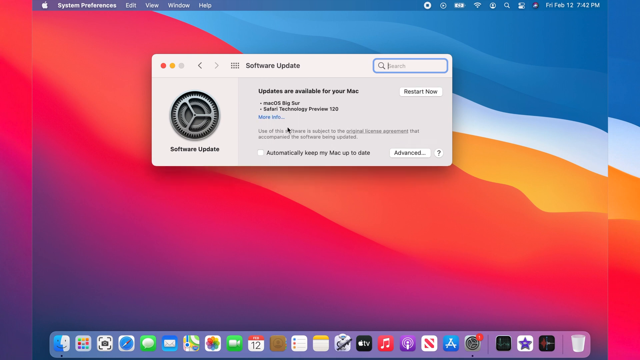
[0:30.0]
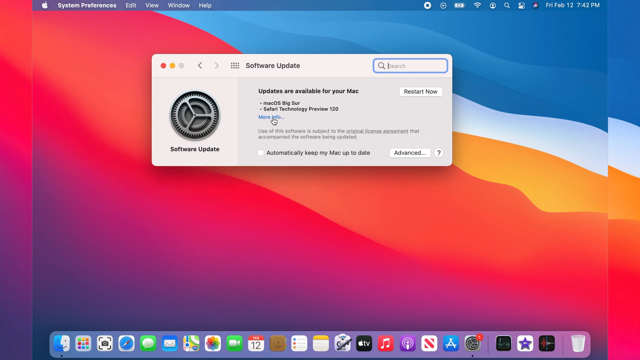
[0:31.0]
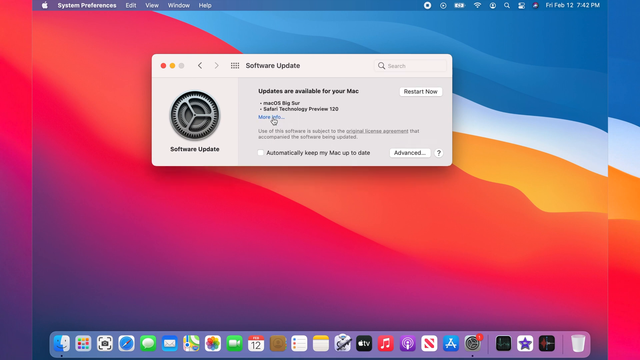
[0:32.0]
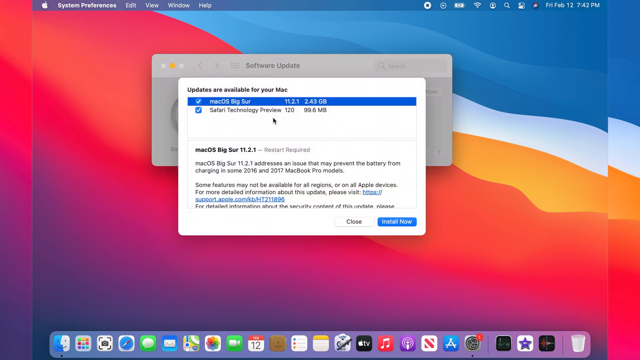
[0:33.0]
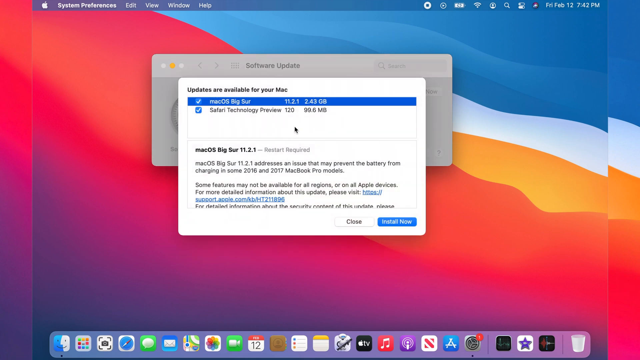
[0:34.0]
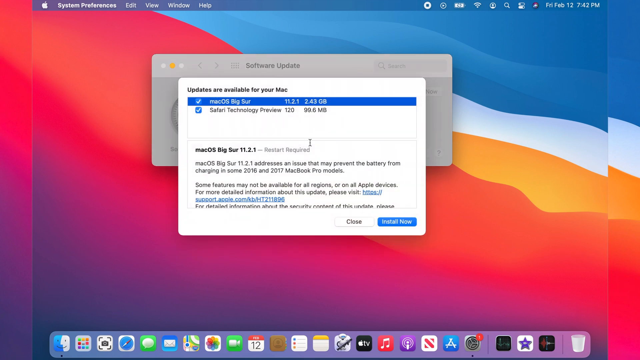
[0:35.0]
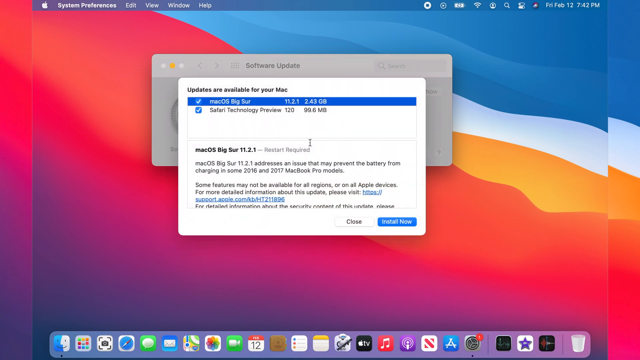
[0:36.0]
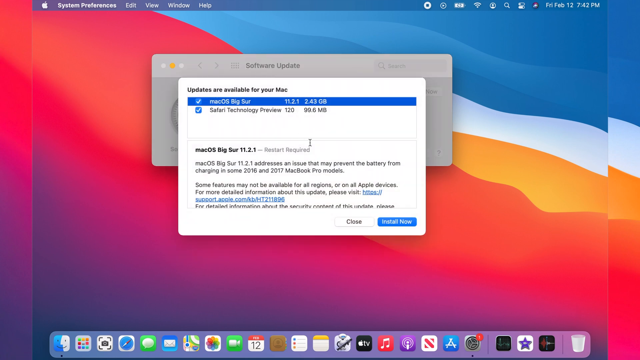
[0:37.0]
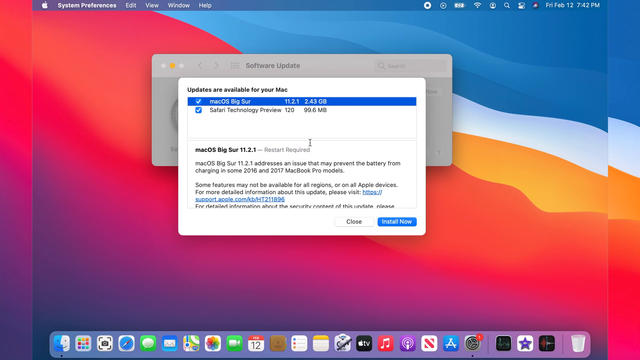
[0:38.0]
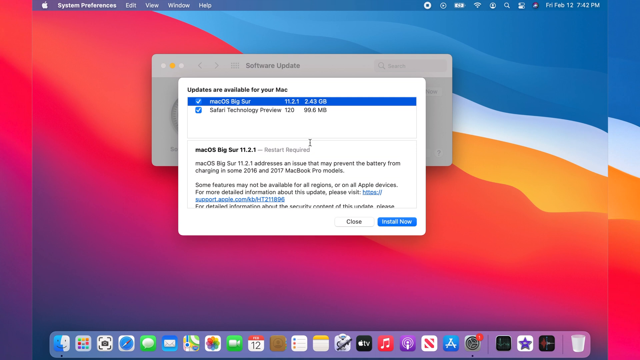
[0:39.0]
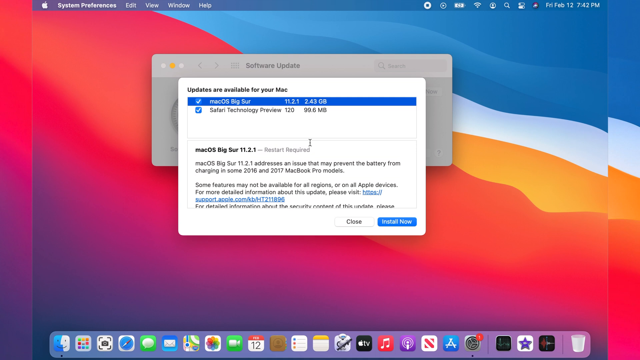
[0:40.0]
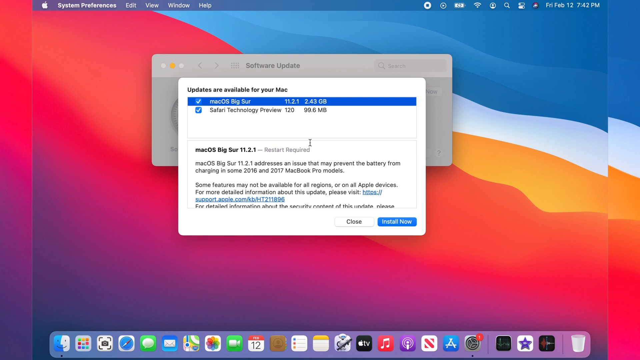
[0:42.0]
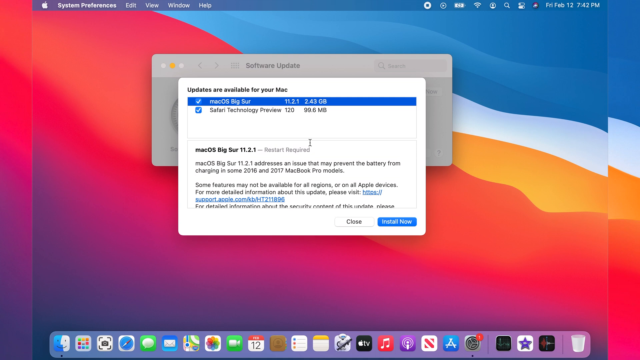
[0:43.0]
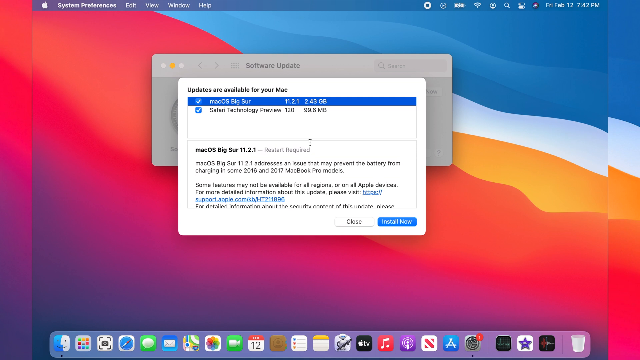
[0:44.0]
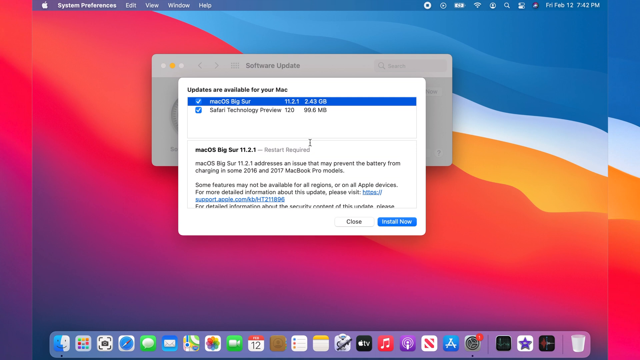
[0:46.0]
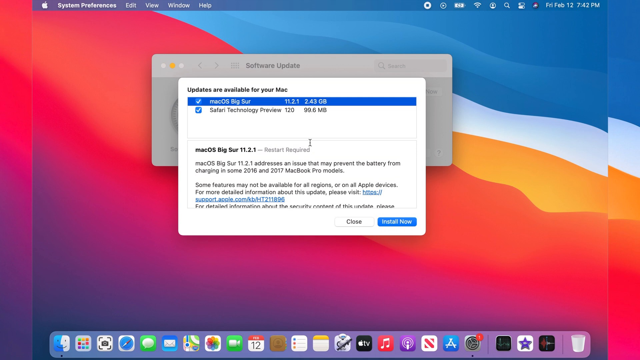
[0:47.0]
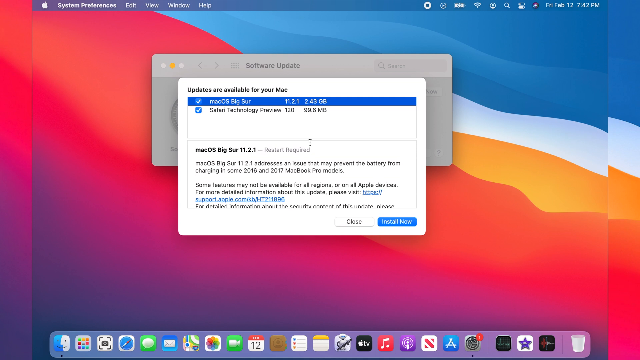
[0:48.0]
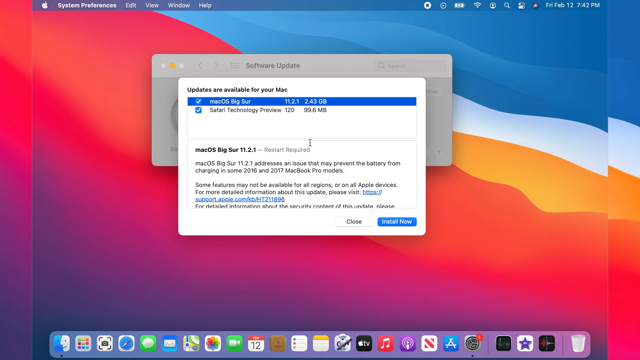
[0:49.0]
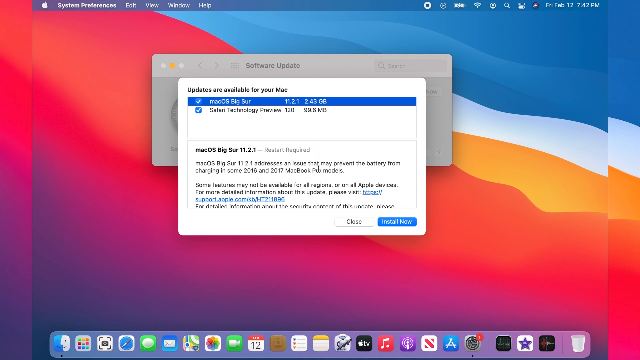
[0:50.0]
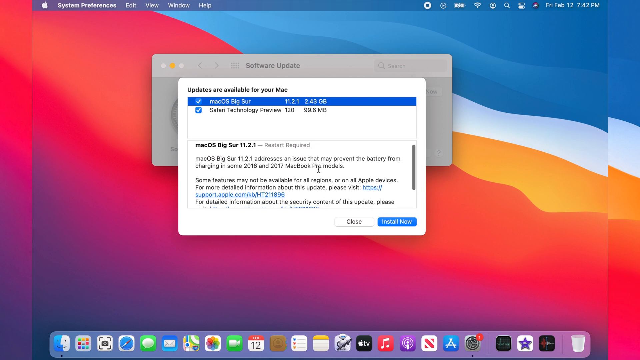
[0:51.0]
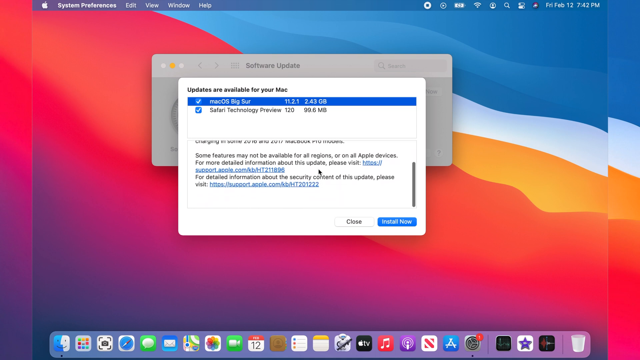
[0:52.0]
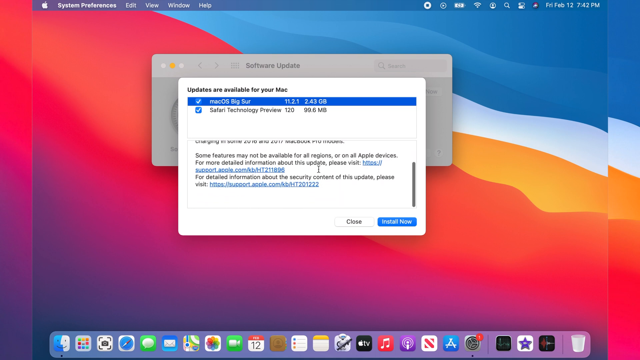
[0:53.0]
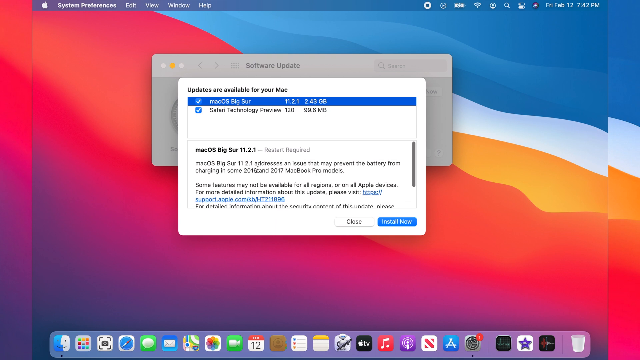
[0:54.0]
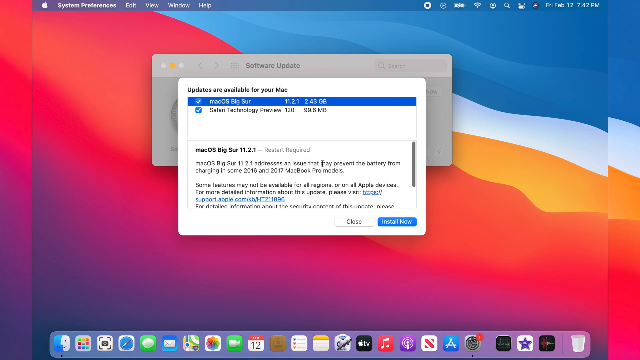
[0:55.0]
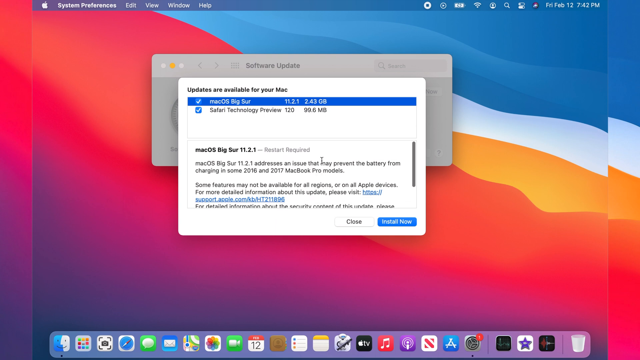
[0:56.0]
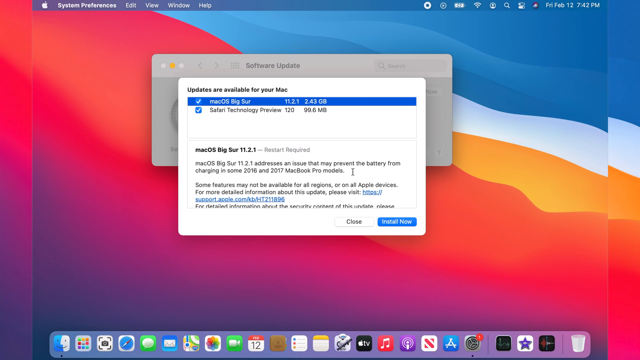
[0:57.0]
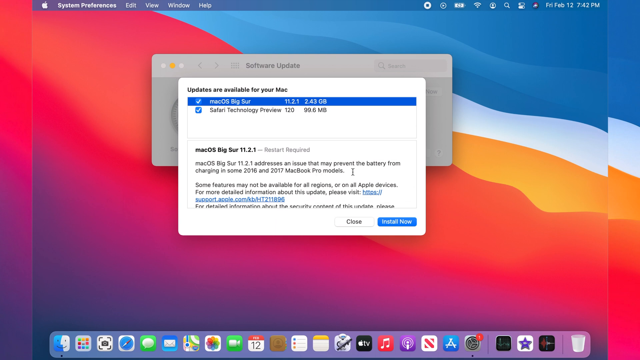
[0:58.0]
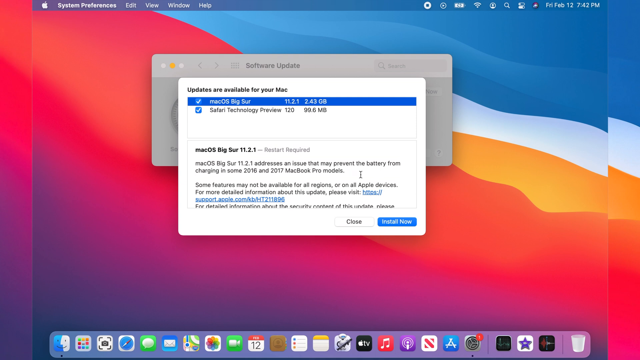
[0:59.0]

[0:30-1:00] He clicks "more info" in blue letters. The screen reads "Updates are available for your Mac" and lists Mac OS Big Sur 11.2.1 at 400.43 gigabytes and Safari technology preview at 99.6 megabytes. Text explains that macOS Big Sur 11.2.1 addresses issues that may prevent the battery from charging in some 2016 and 2017 MacBook Pro models, and that "Some features may not be available for all regions or on all Apple devices." The screen is white, with close and install now buttons that can be pressed. The background is still red, orange, yellow, blue and white. The mouse moves up and down the screen over the text, scrolling up and down the white box with the update.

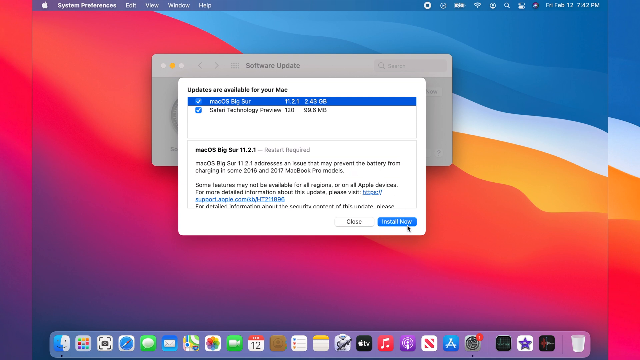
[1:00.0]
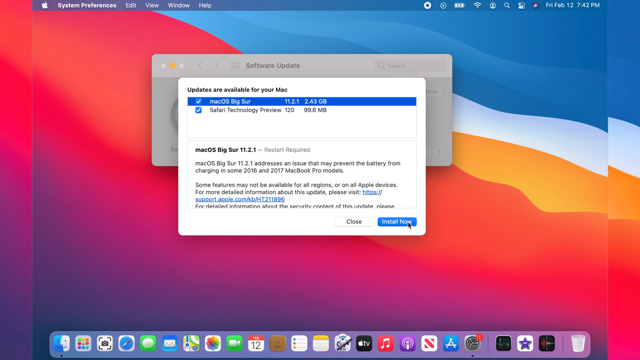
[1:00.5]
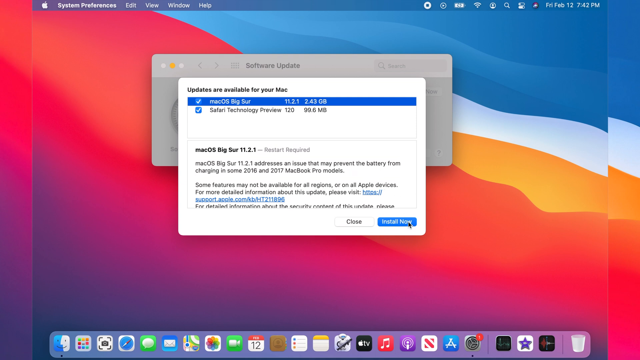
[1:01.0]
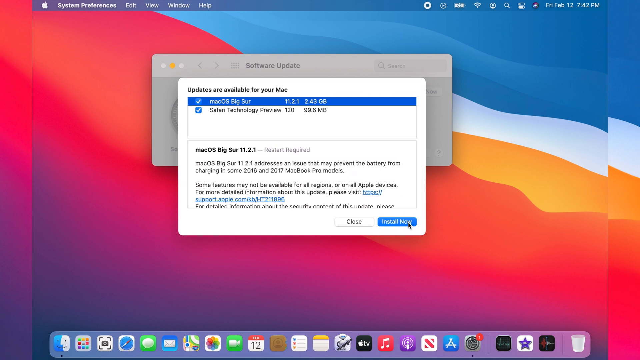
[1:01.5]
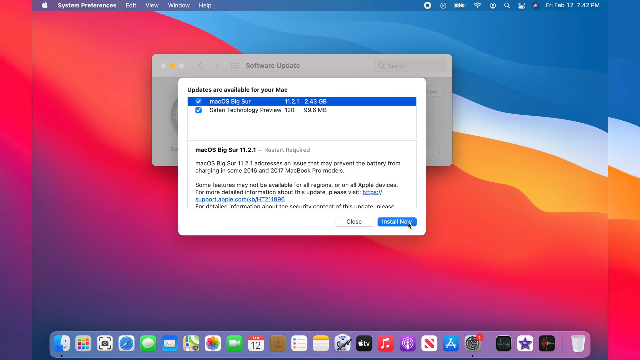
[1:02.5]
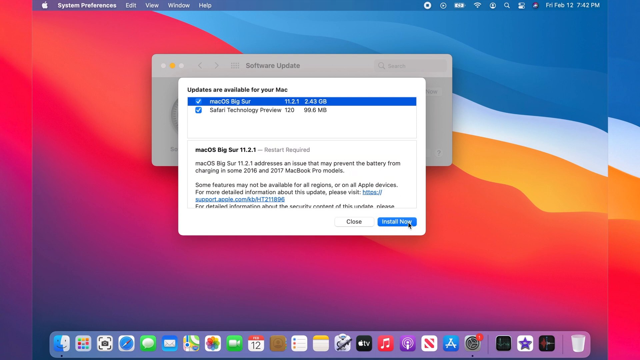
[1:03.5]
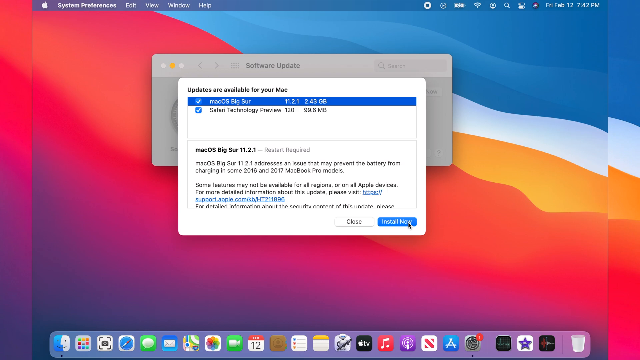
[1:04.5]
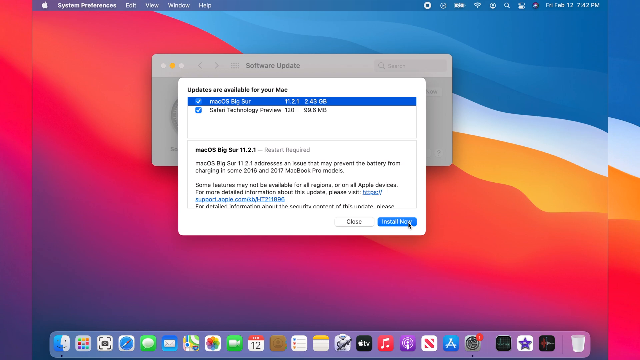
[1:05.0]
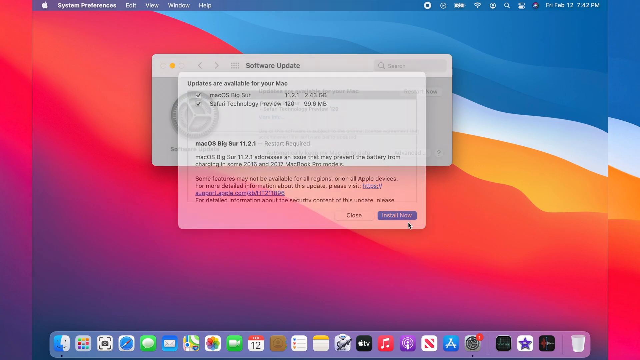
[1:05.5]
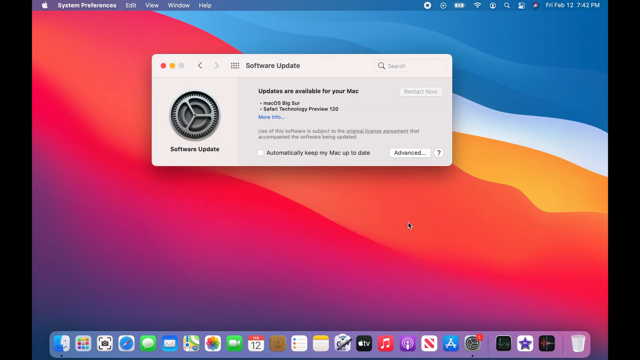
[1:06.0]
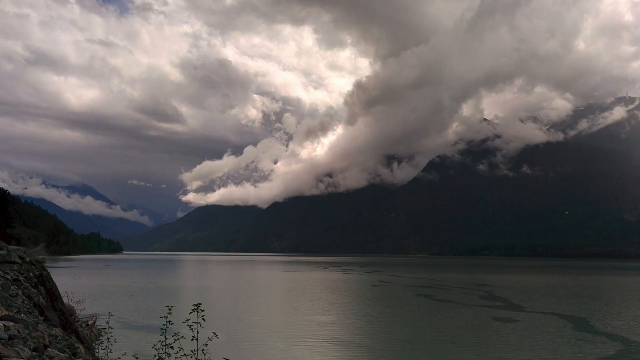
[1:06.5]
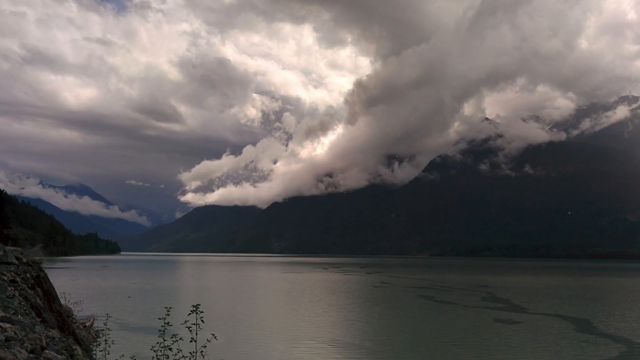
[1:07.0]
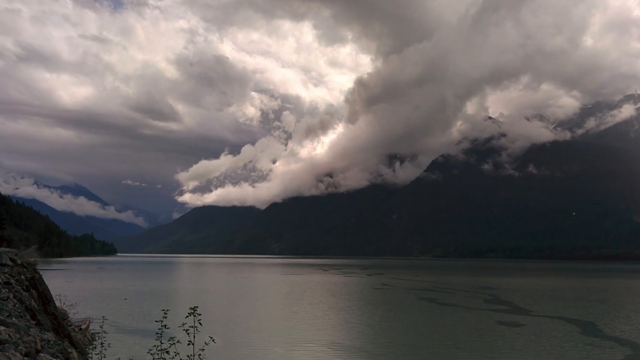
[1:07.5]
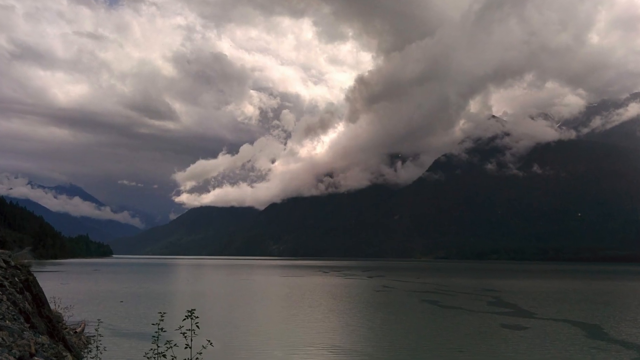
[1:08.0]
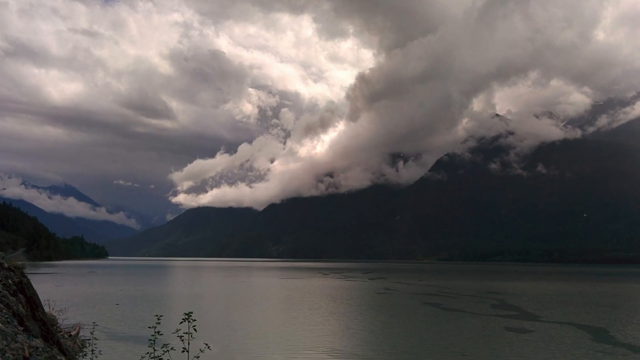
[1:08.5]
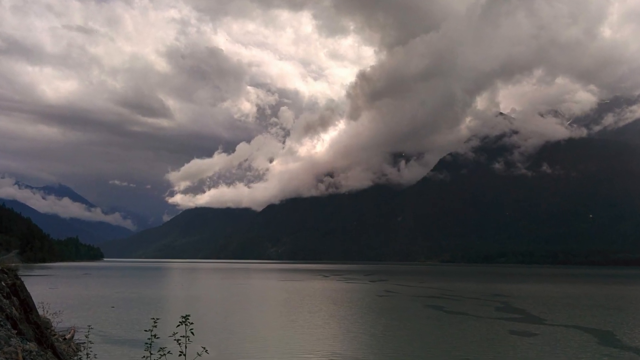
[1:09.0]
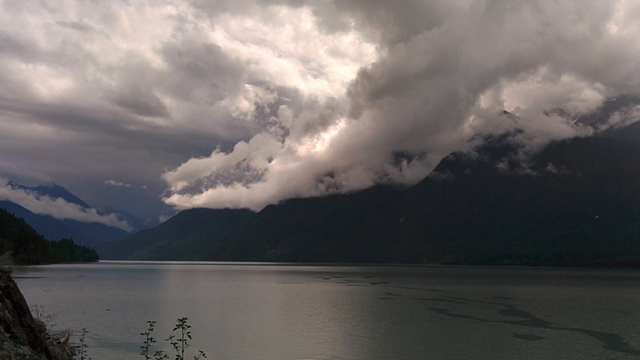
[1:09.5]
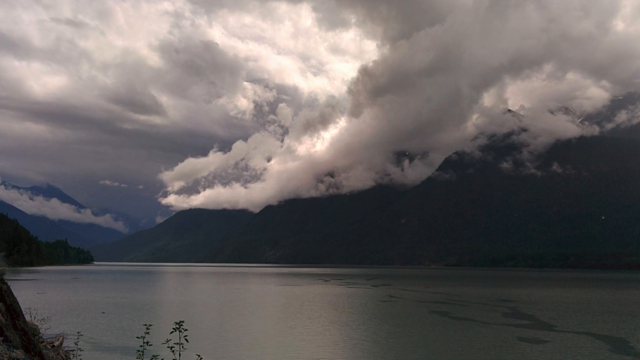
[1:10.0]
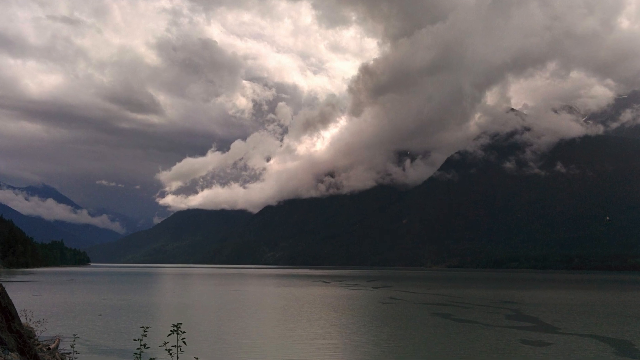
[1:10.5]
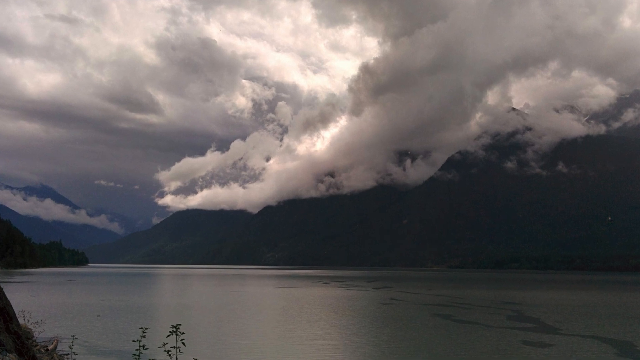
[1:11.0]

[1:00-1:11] A white box about updates for the Mac is on the computer screen, which has a bar at the bottom with all the Mac icons. The white box is on top of a gray rectangle called software updates. The screen shows a time of about 7:42 p.m. on Friday, February 12th. The mouse is clicking on or hovering over the install button. The install button is clicked, and the screen changes to something like a lake scene with mountains and clouds, kind of dark, where the video ends.